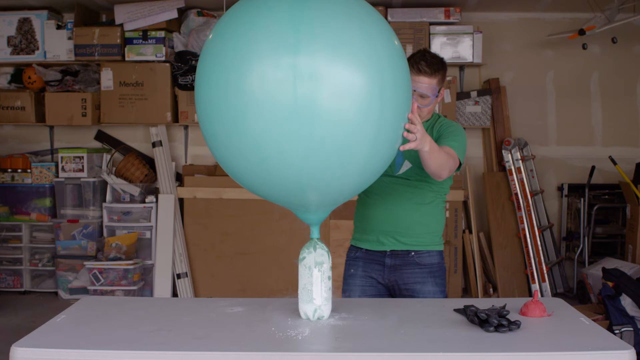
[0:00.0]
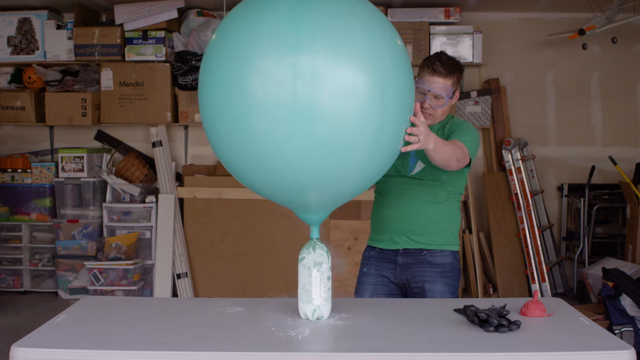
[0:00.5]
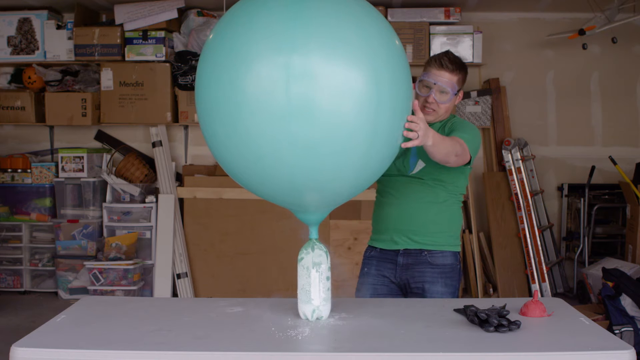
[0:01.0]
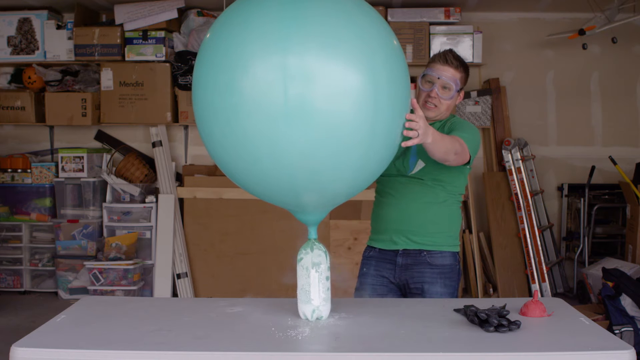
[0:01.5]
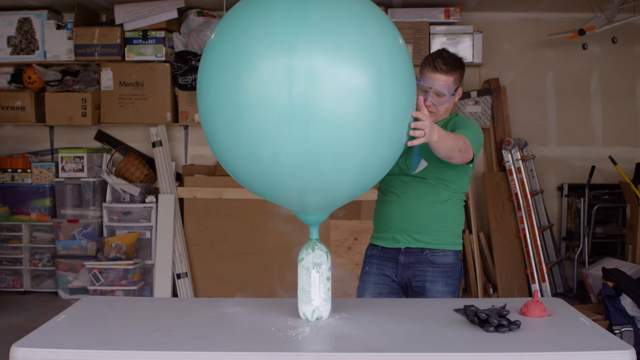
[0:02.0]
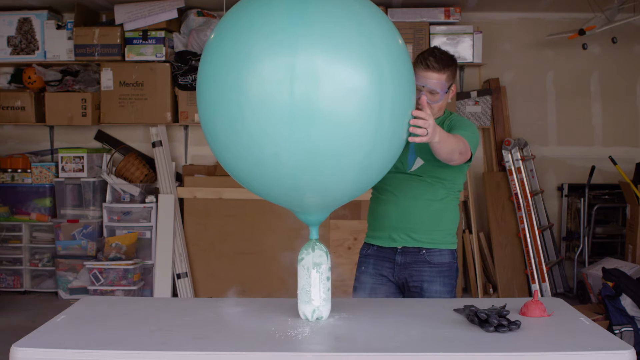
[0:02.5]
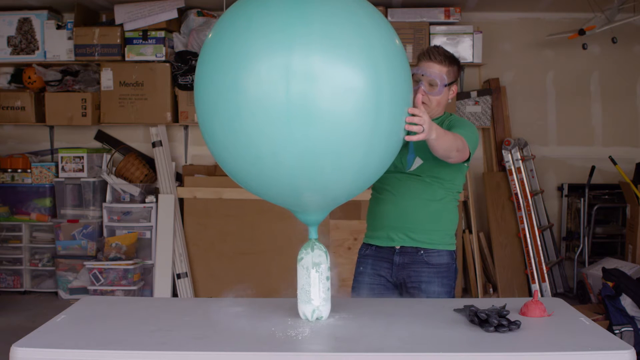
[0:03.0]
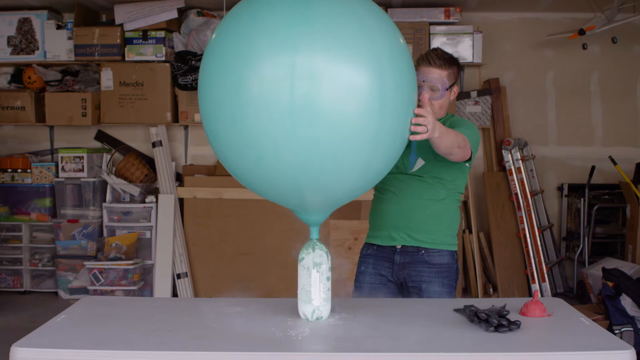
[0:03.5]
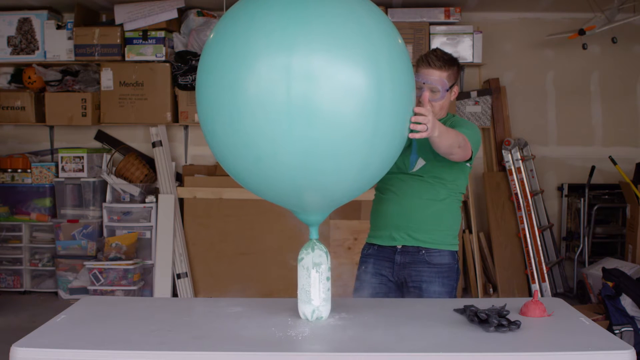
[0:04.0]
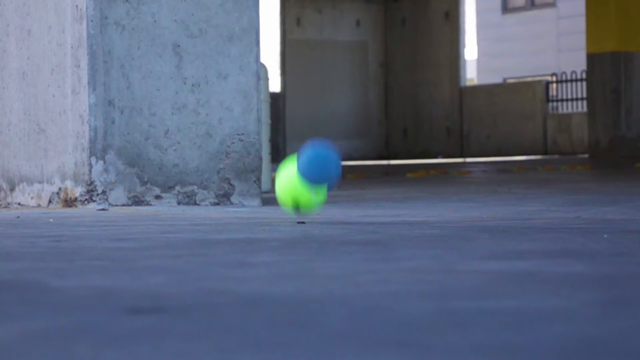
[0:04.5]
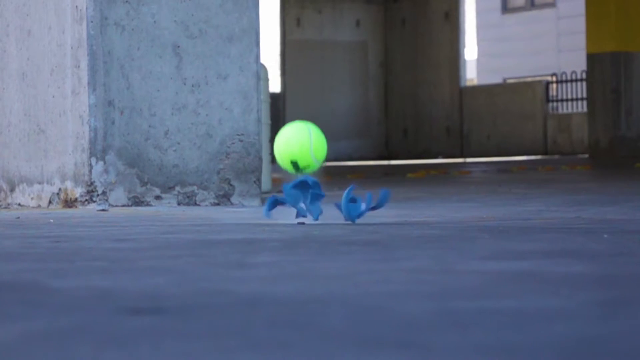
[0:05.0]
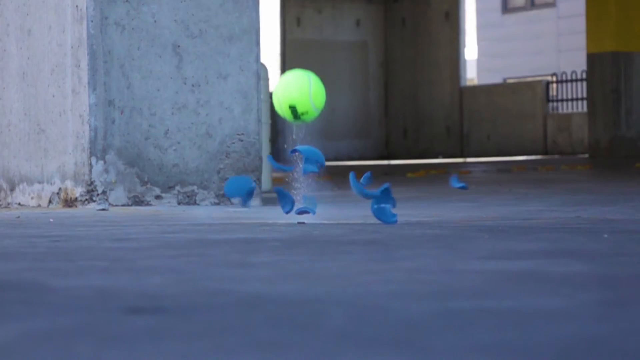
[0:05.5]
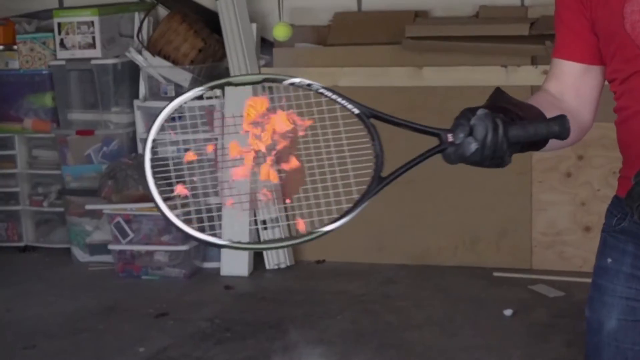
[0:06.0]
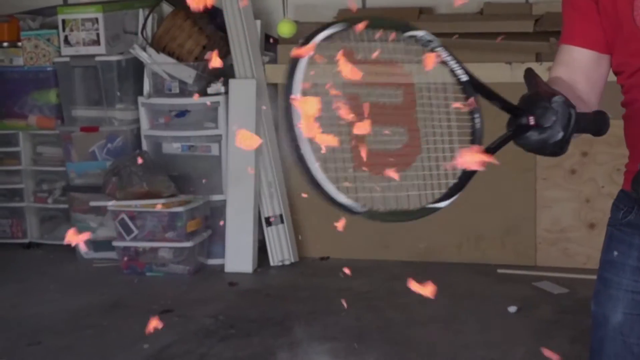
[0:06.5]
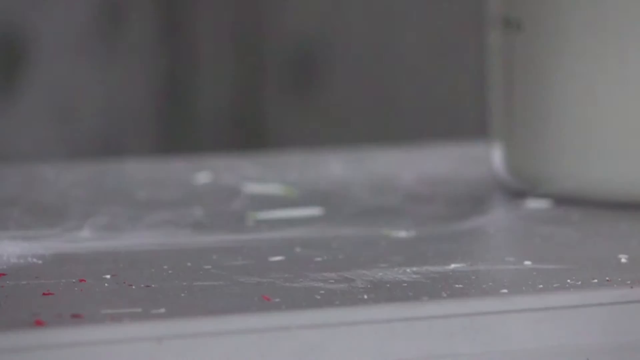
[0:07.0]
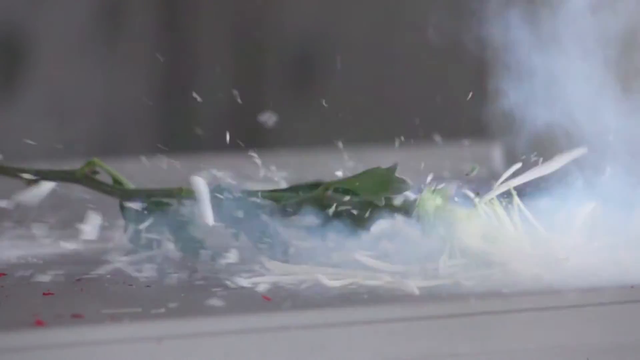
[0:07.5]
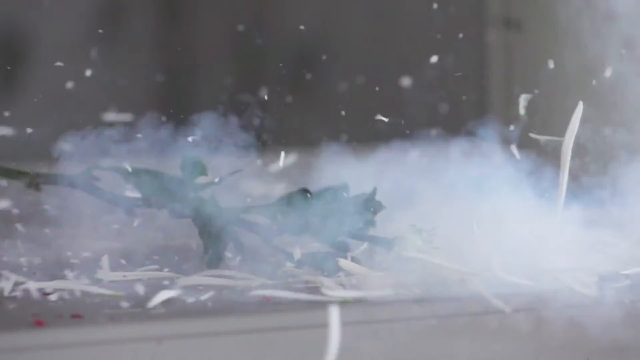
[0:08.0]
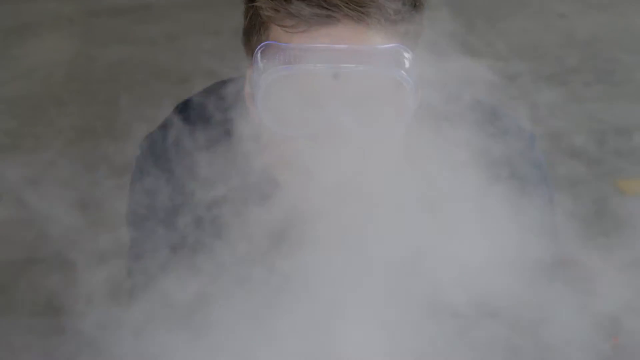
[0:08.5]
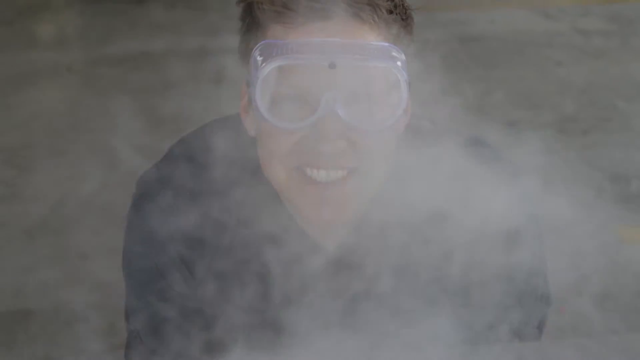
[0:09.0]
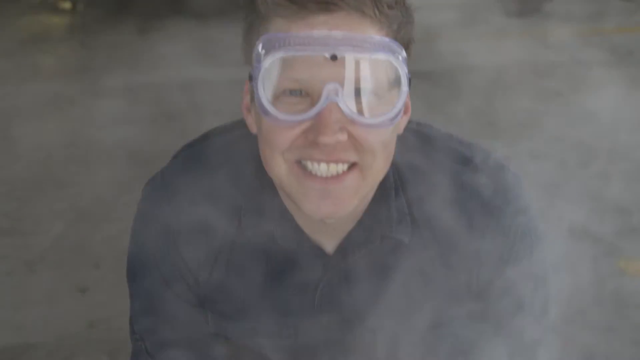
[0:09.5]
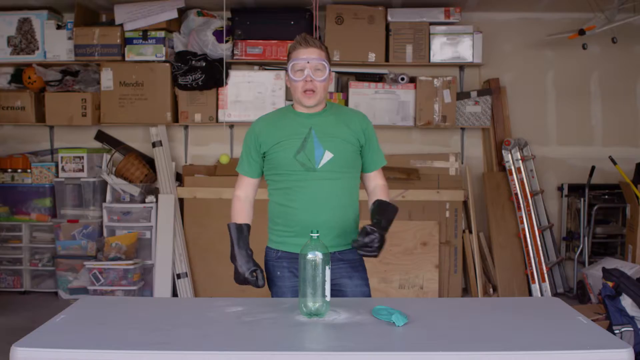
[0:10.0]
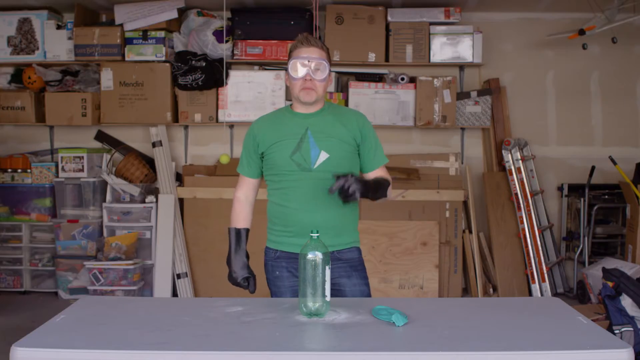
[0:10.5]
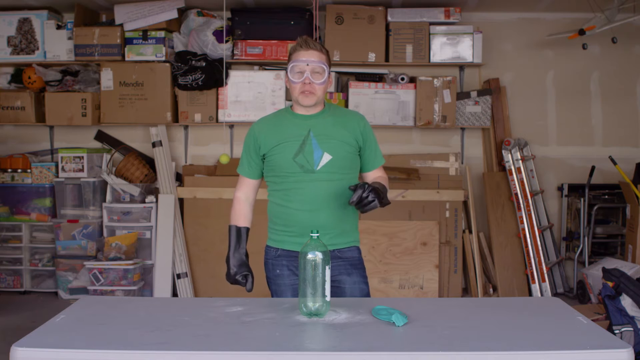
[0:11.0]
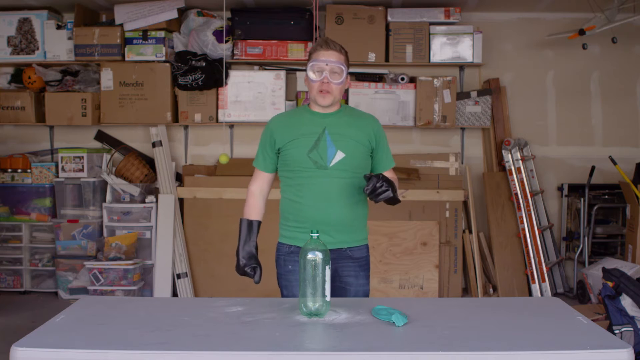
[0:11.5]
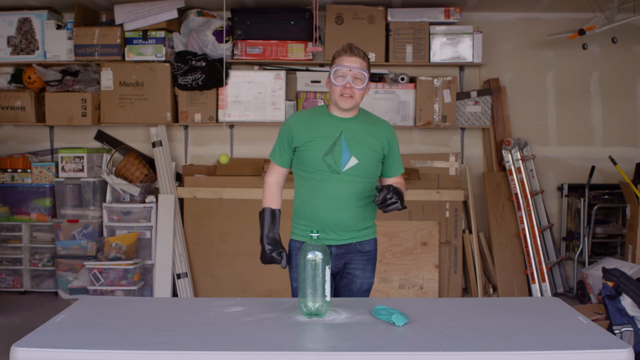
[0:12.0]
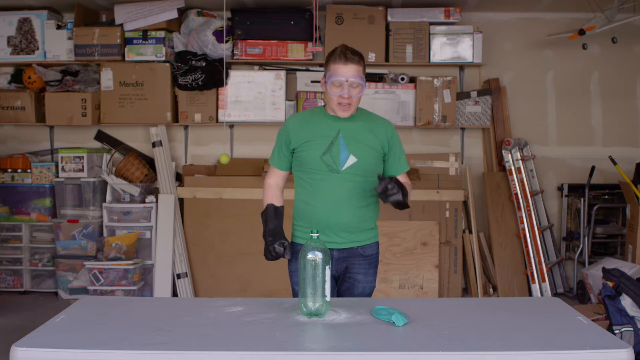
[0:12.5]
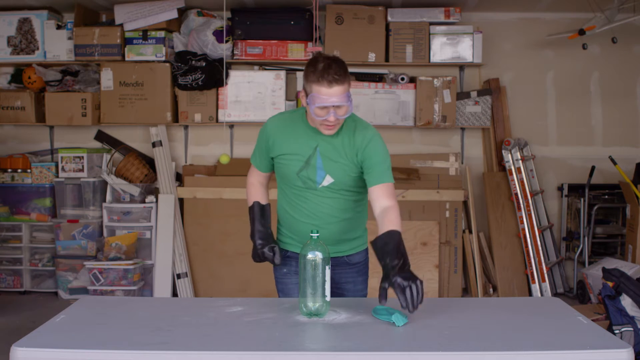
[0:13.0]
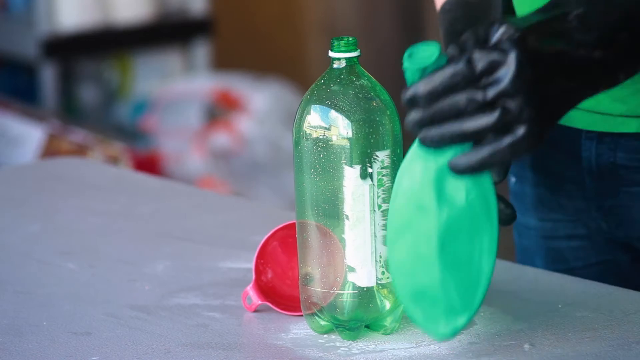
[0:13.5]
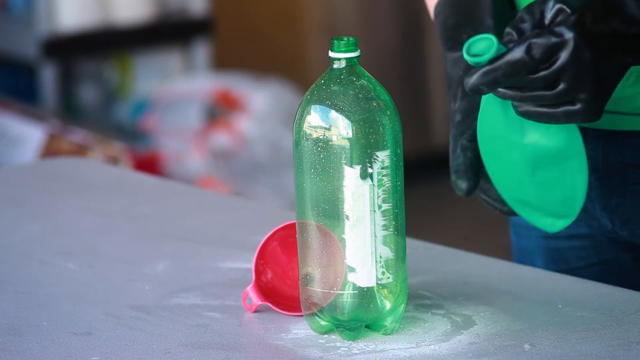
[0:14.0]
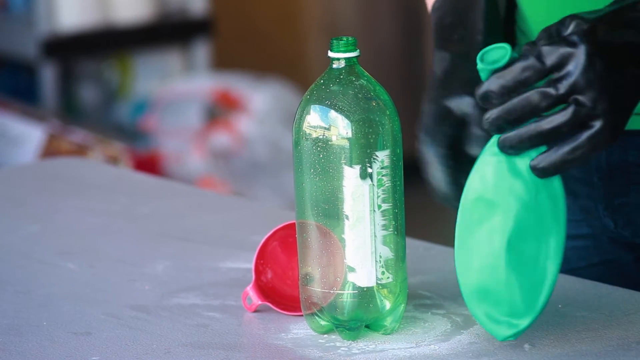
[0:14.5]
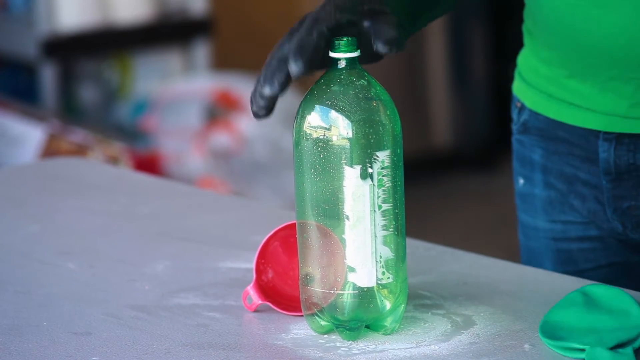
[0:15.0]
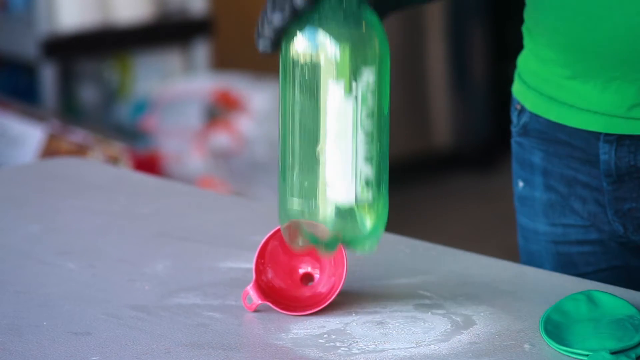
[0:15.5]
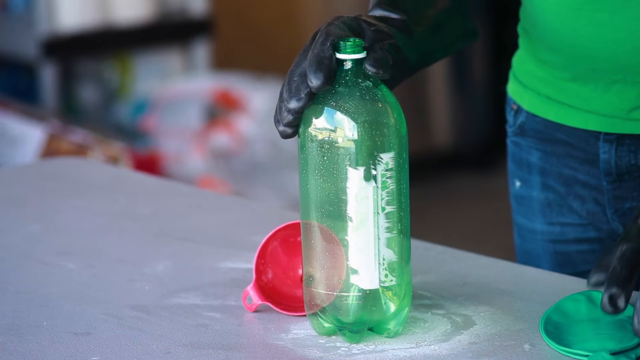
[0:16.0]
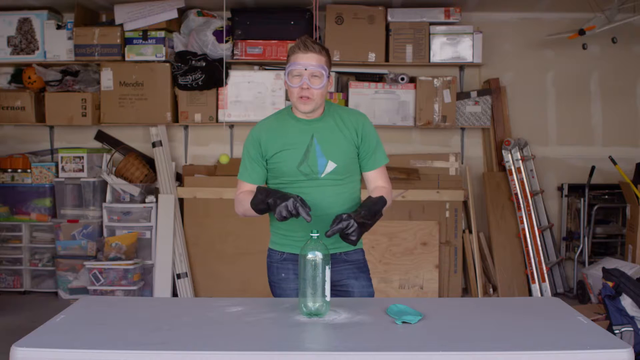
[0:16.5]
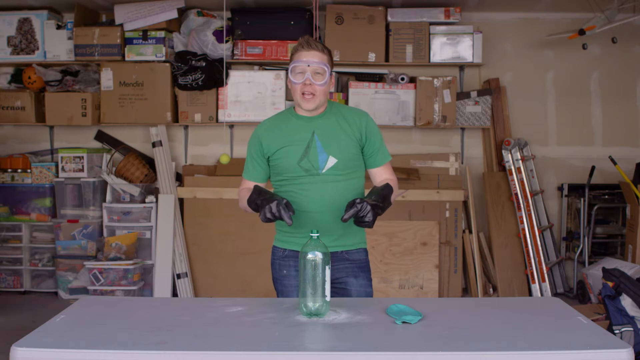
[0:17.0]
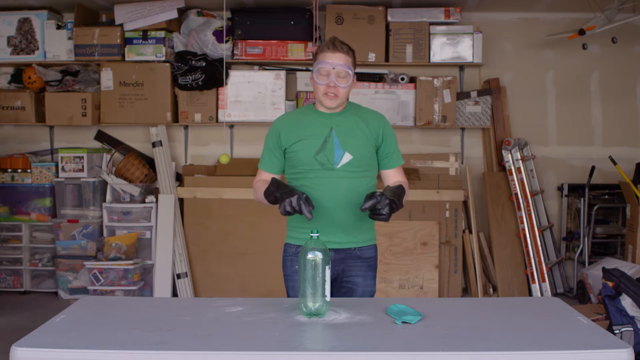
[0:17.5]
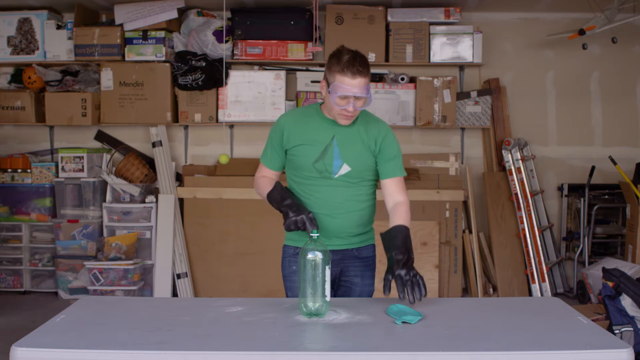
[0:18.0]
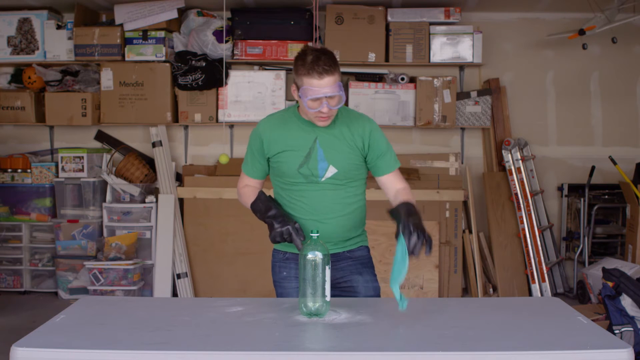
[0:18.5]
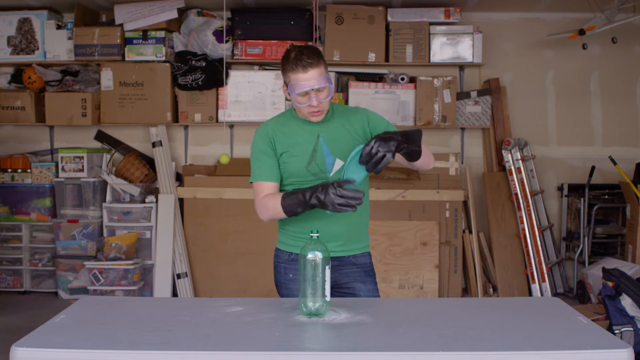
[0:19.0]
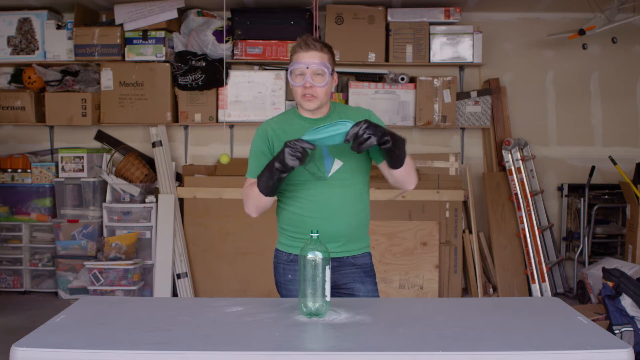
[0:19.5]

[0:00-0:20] A man wearing safety goggles works with a balloon in his garage. The video then moves through several different scenes: an empty bottle lies on a table, and the man, wearing black gloves, uses a balloon to cover the empty bottle. As the video progresses, the green balloon expands more and more. In another scene he holds a racket and smacks an object, which shatters into many smaller pieces. Behind him are many boxes, containers and various random items stored in the garage.